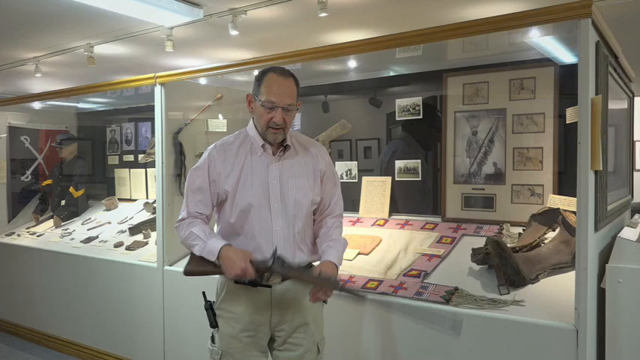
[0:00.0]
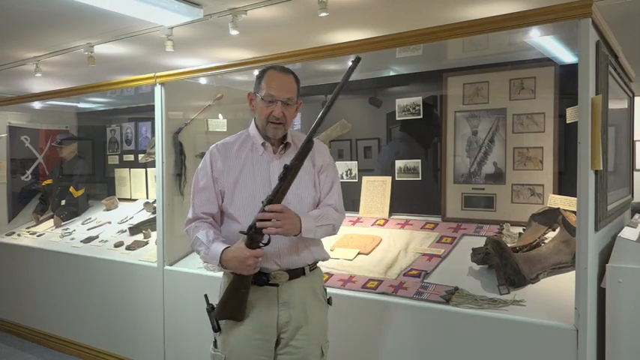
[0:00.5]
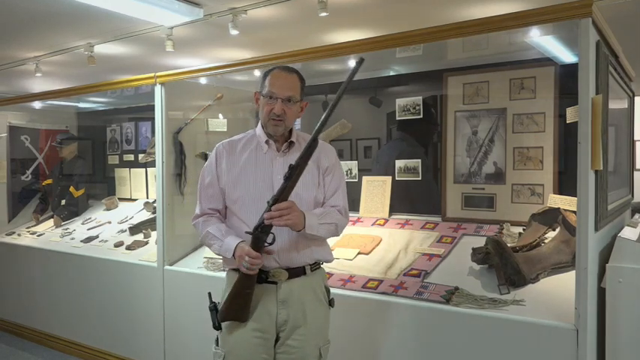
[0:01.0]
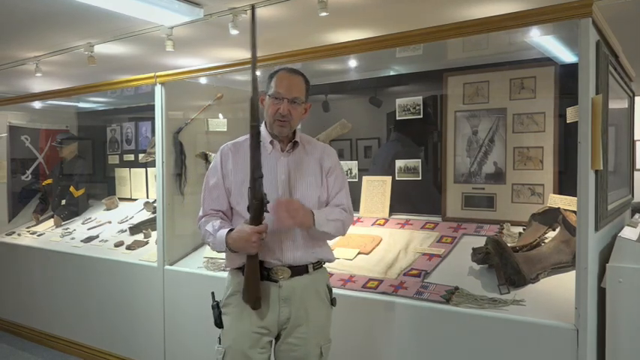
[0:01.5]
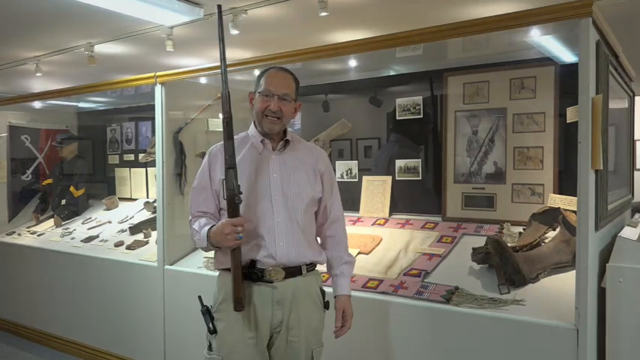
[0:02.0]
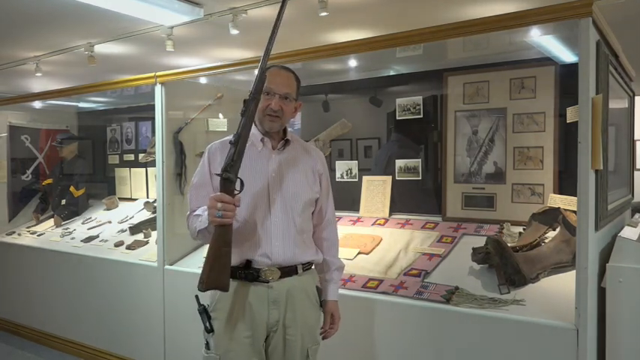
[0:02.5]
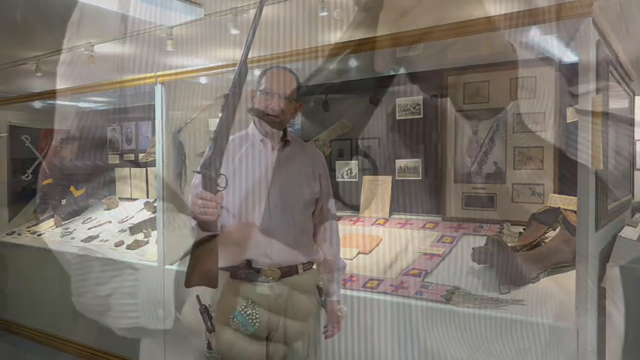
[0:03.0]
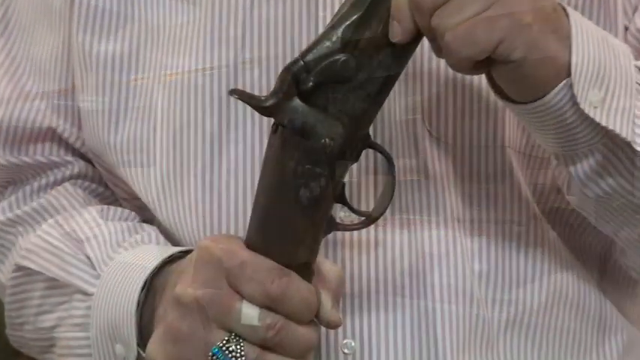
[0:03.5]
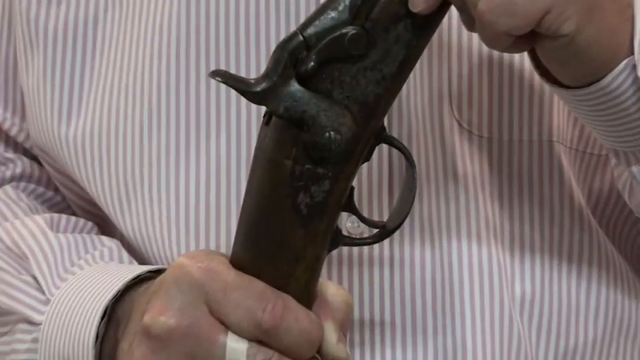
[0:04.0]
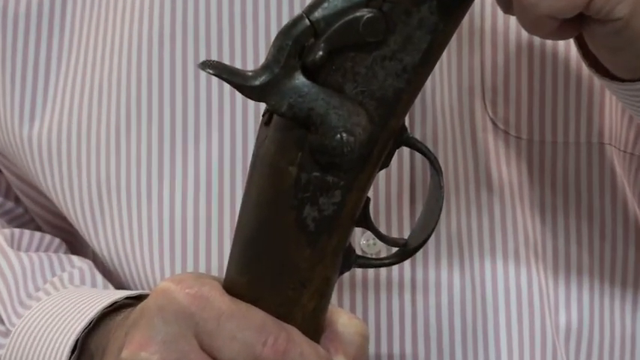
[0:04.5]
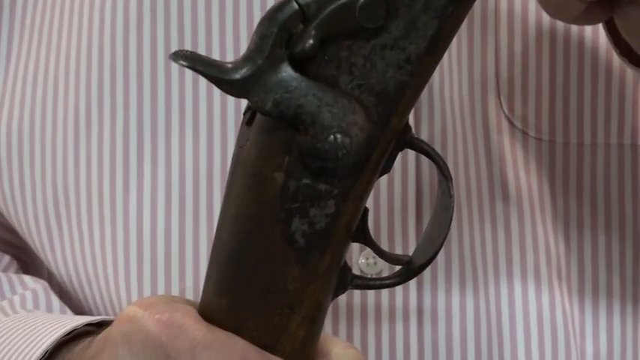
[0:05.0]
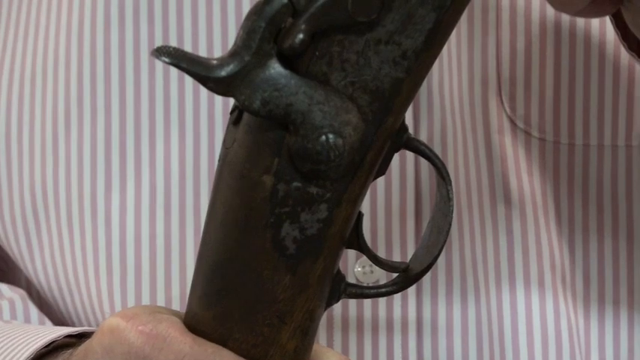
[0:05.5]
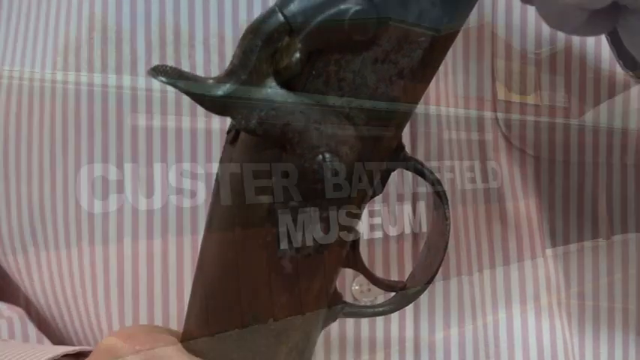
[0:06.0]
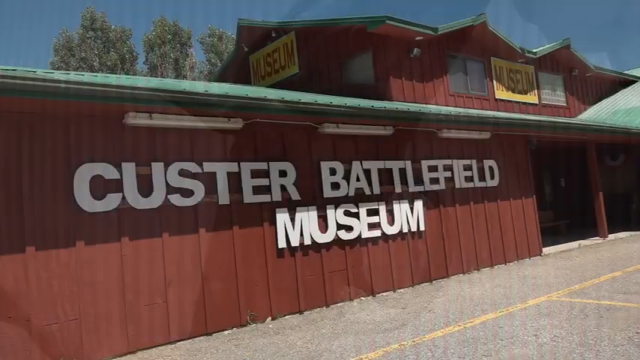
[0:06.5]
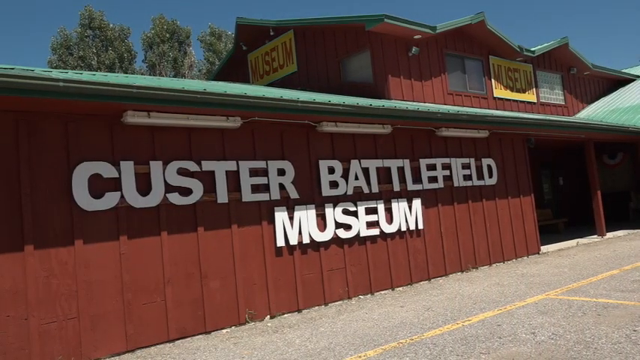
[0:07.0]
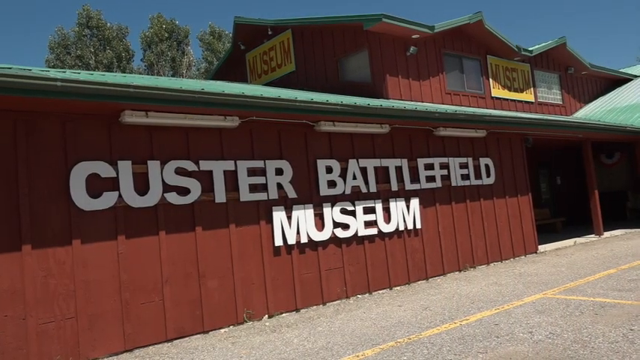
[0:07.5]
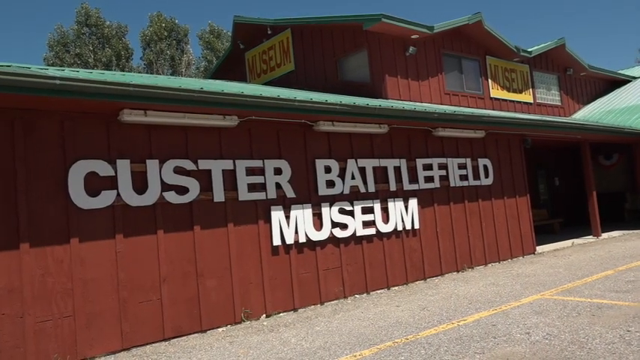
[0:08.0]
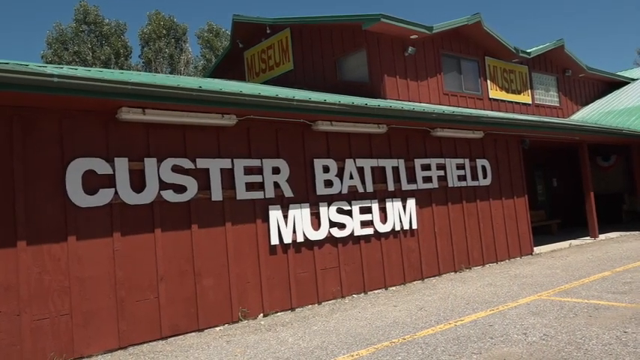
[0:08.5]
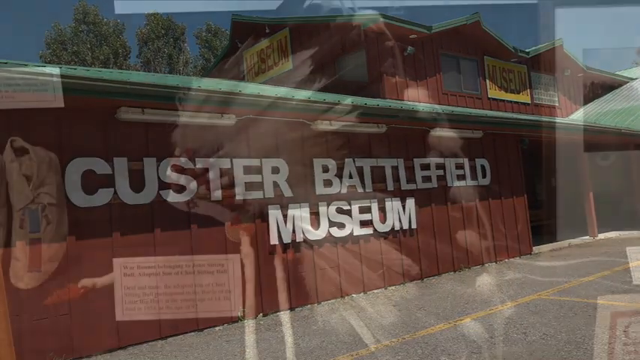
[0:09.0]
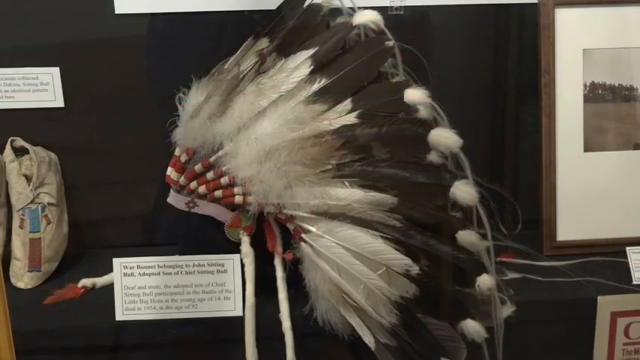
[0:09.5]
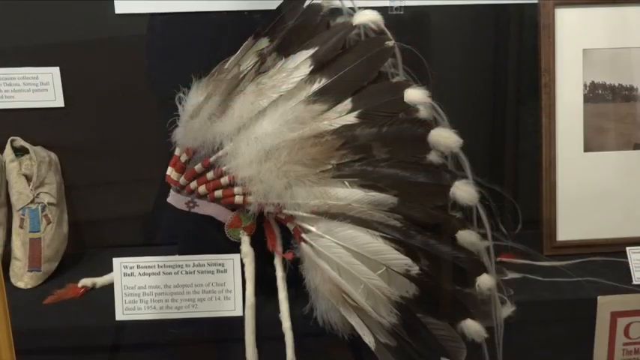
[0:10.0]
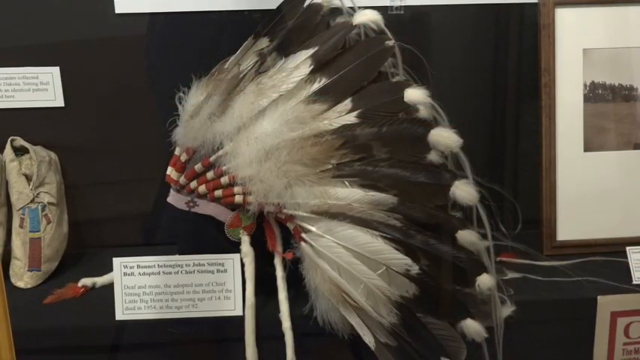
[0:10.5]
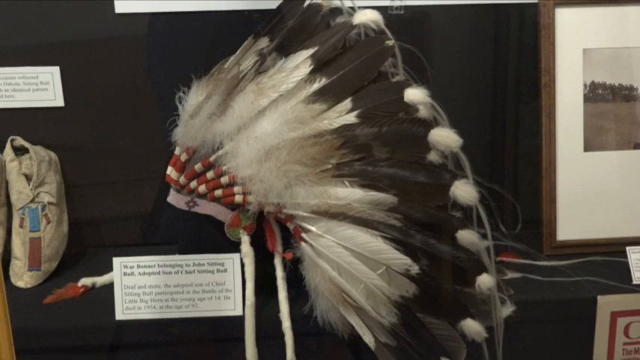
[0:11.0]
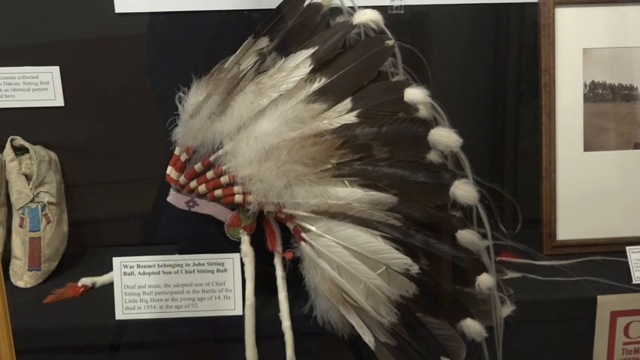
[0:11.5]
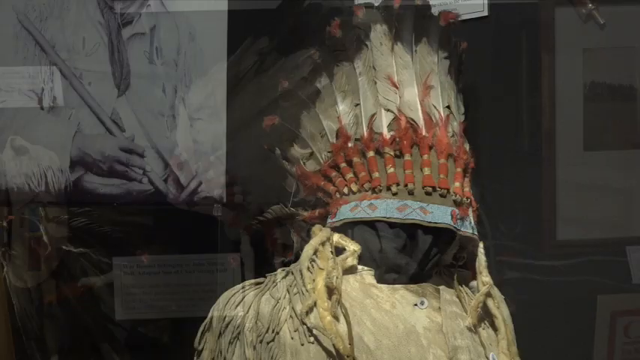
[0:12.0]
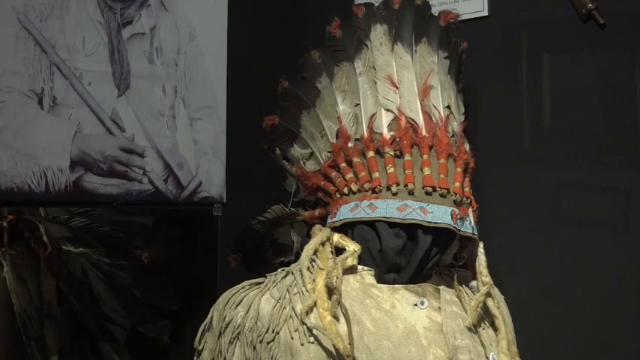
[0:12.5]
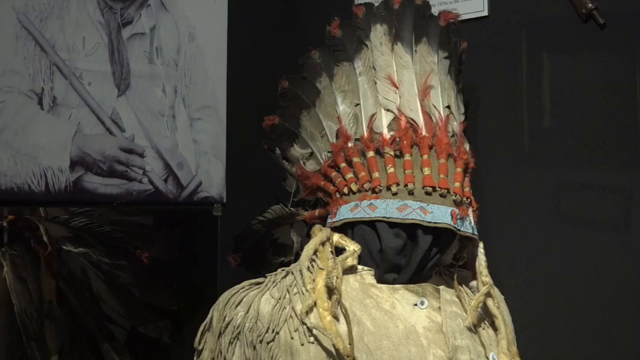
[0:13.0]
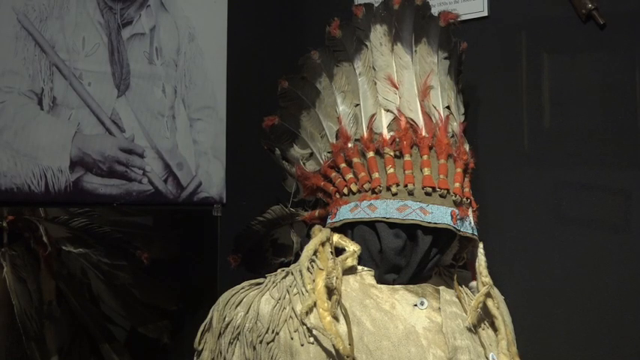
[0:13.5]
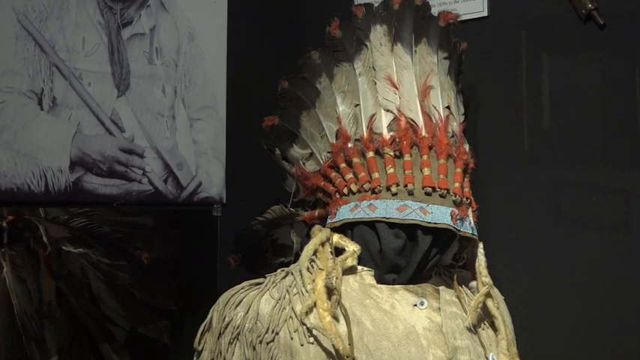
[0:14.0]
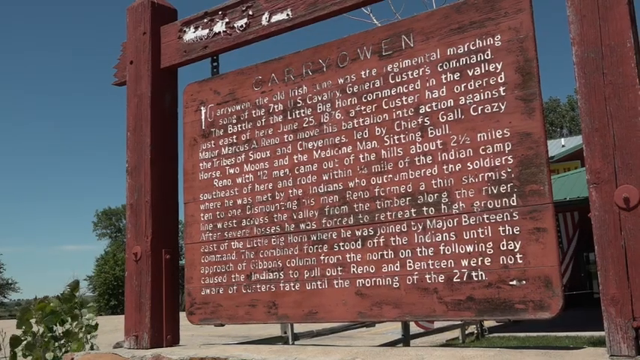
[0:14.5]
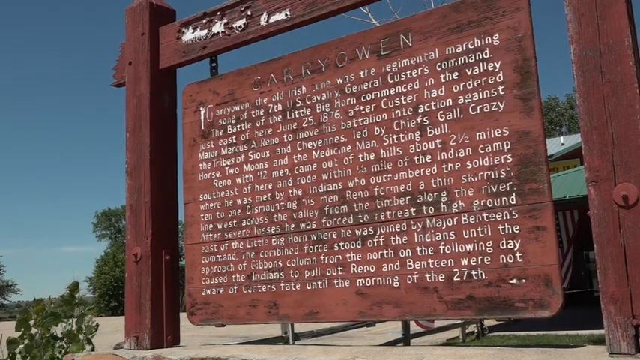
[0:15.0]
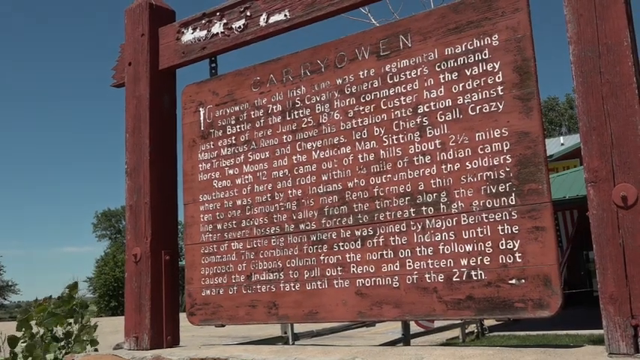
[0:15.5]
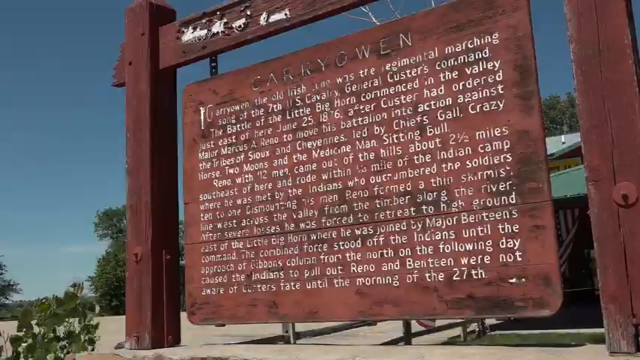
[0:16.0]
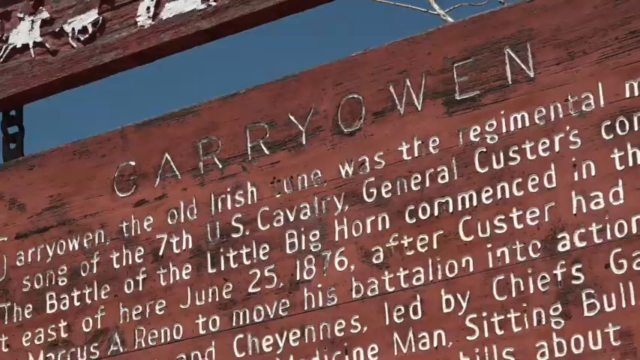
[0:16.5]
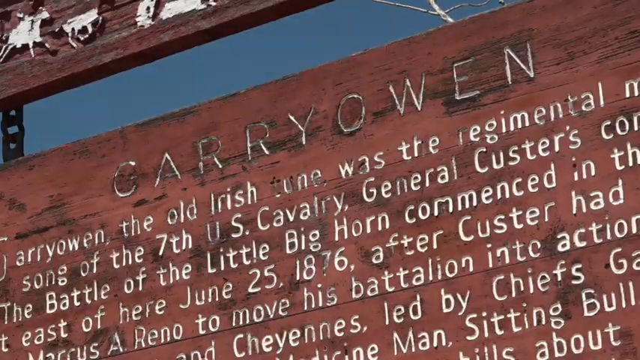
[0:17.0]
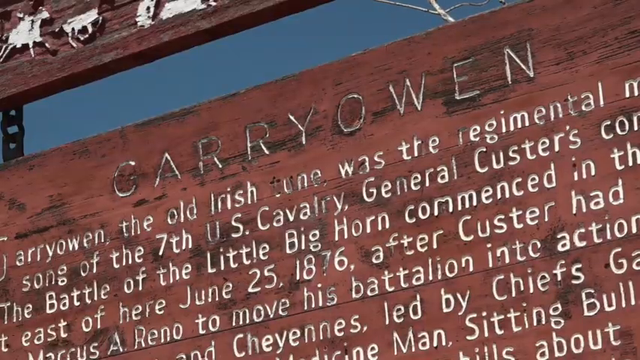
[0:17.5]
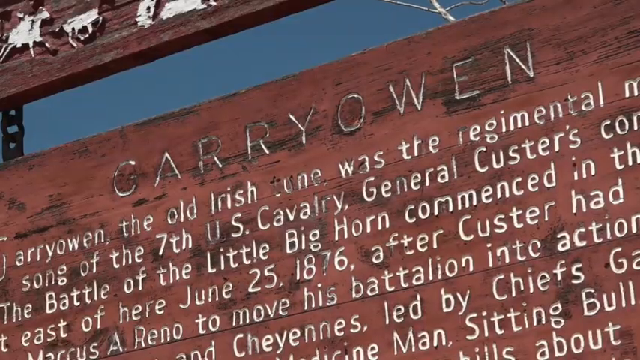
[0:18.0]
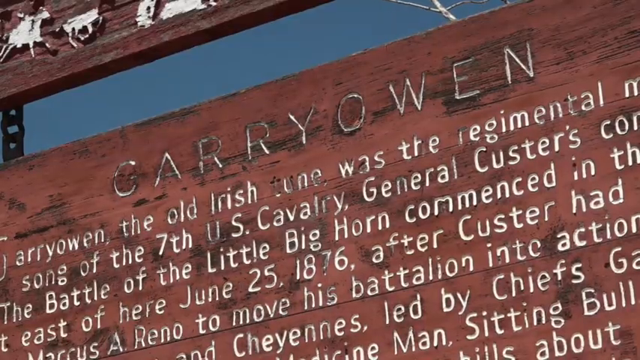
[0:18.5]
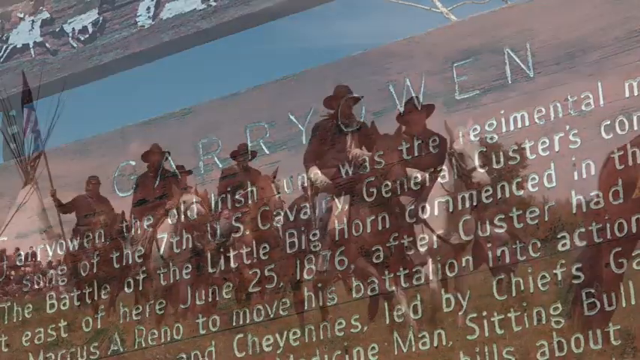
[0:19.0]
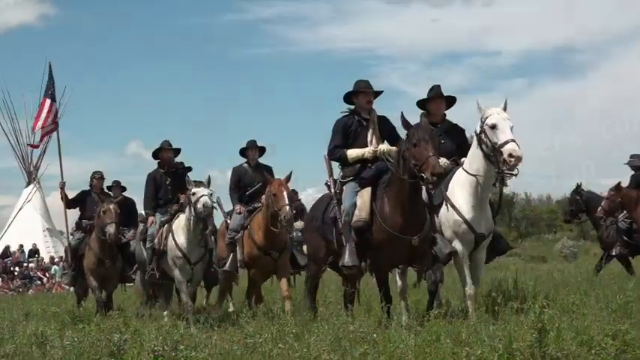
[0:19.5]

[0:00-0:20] An older man wearing eyeglasses, a pink long-sleeved dress shirt and khaki pants holds up a rifle. In the background are plenty of glass window displays showing different types of objects inside, such as pictures. The camera zooms in to a close-up of the rifle he is holding up, then pans out to different types of Native American feather headgear. A sign with several lines of writing follows; its title is "Gary Owen", and it gives a brief description of the person known as Gary Owen. While the Gary Owen sign is shown, the setting is a bright, sunny day.